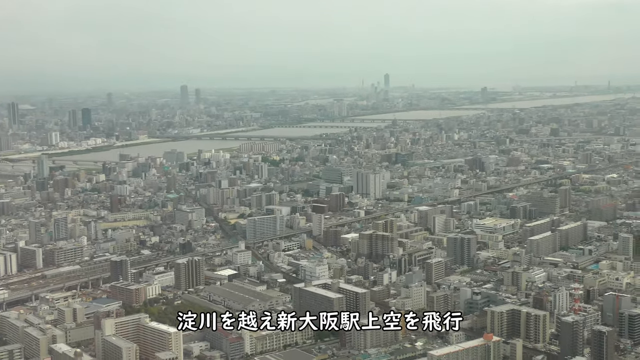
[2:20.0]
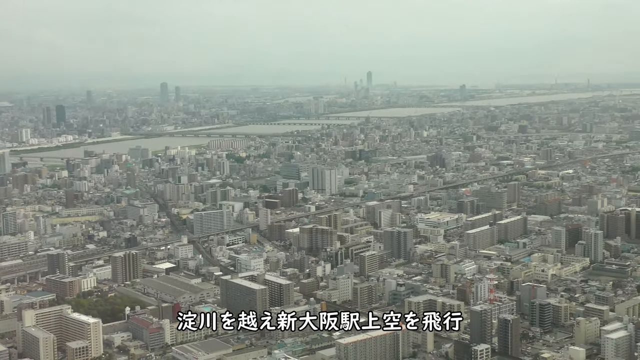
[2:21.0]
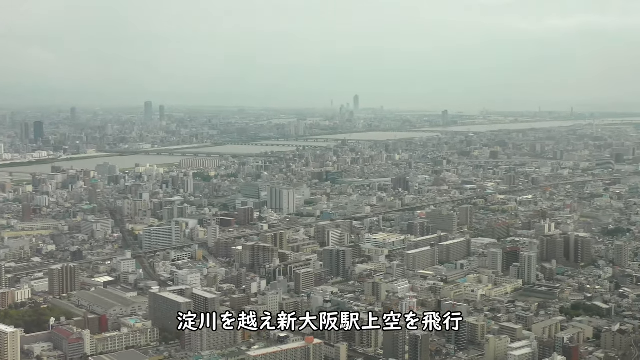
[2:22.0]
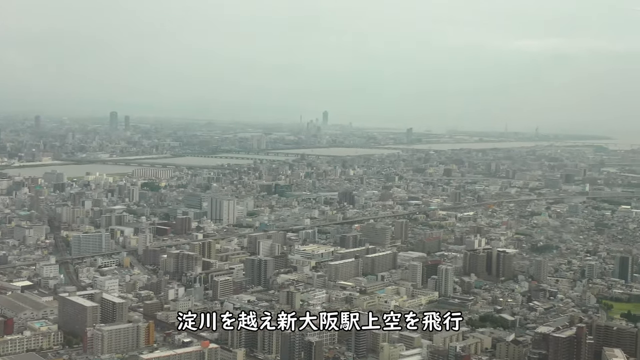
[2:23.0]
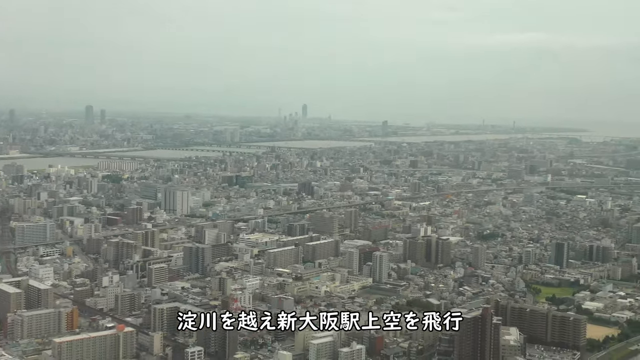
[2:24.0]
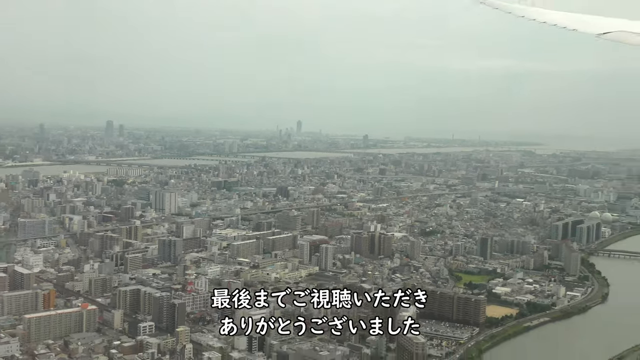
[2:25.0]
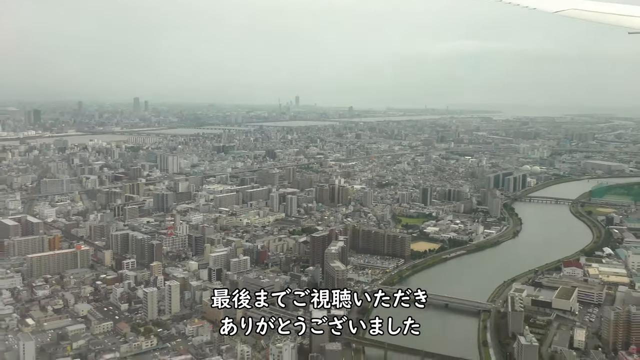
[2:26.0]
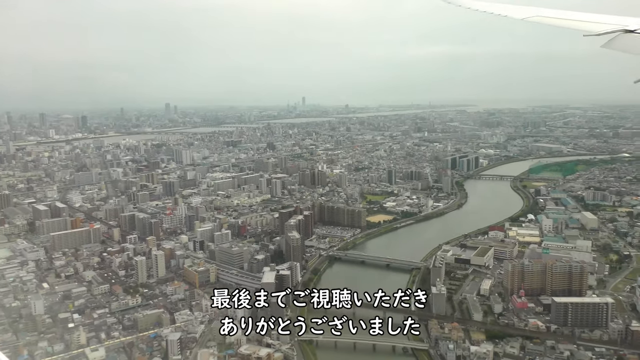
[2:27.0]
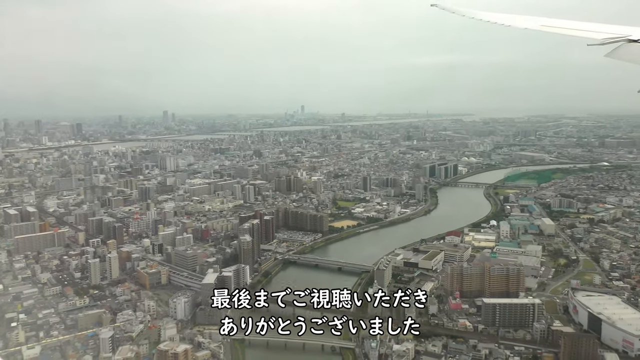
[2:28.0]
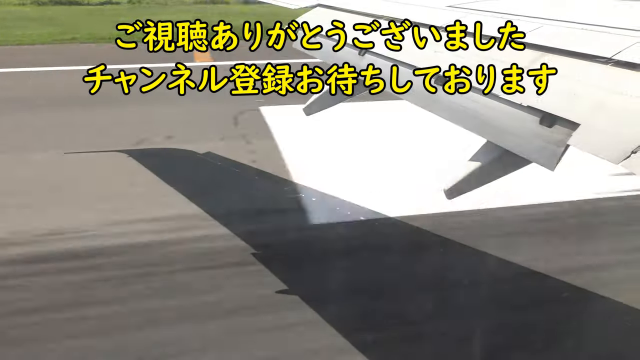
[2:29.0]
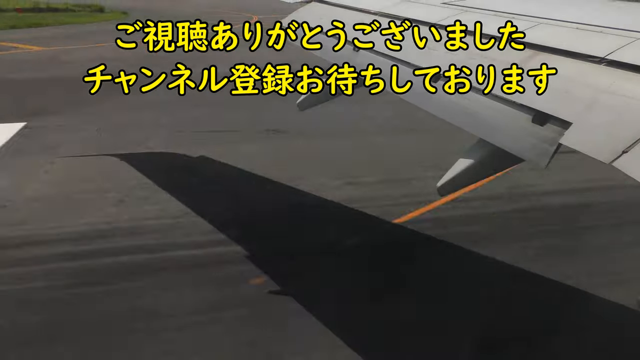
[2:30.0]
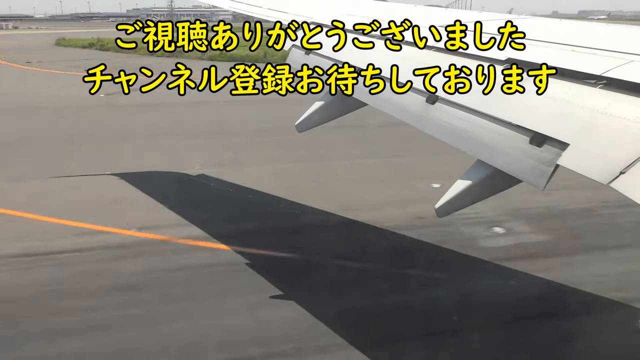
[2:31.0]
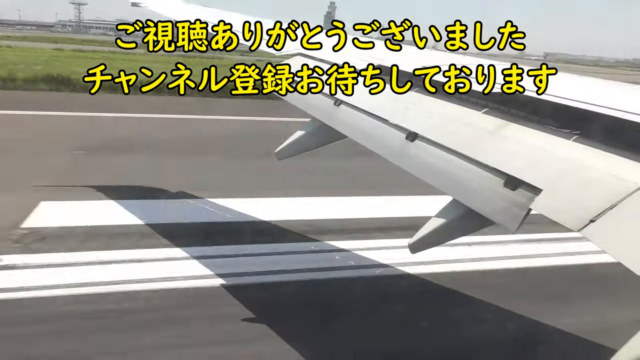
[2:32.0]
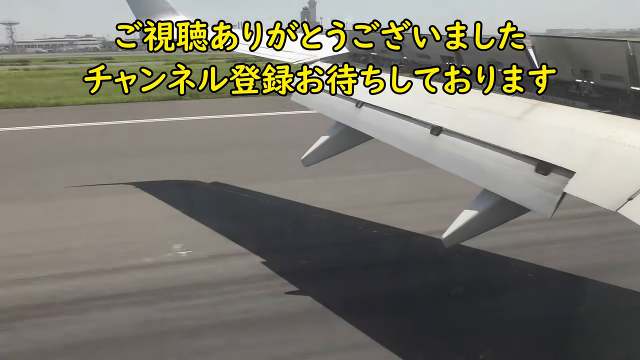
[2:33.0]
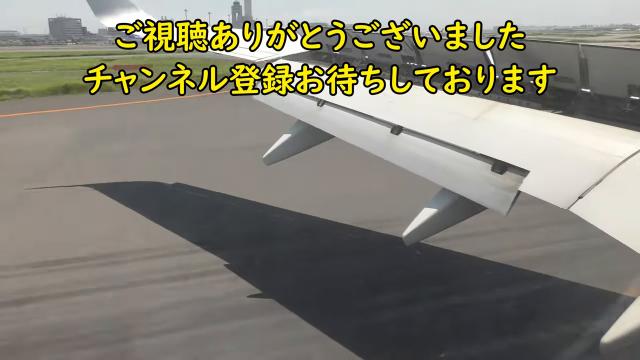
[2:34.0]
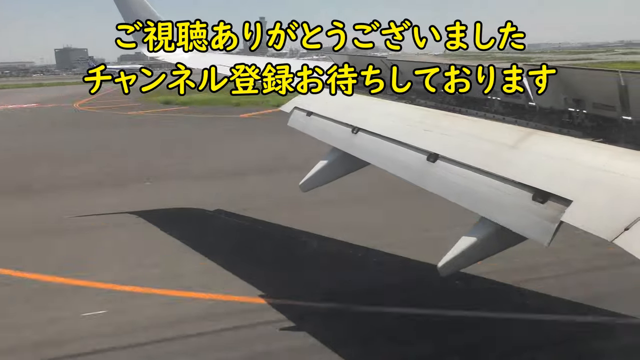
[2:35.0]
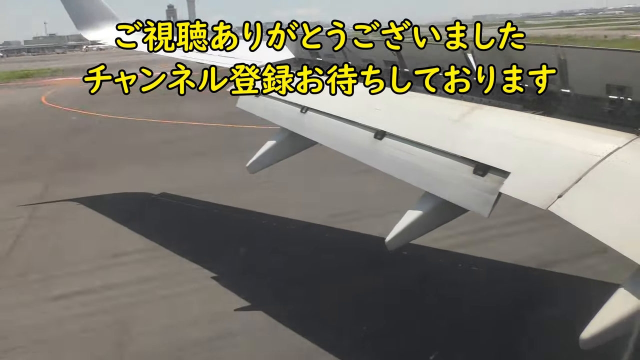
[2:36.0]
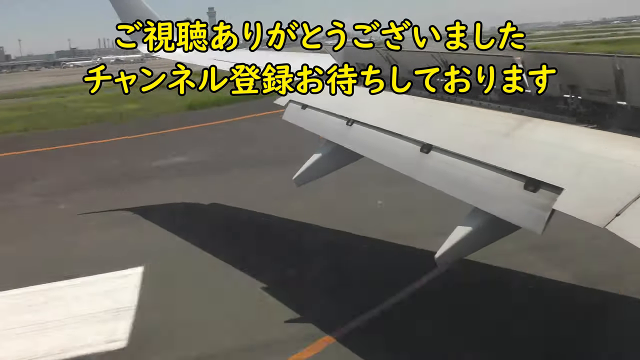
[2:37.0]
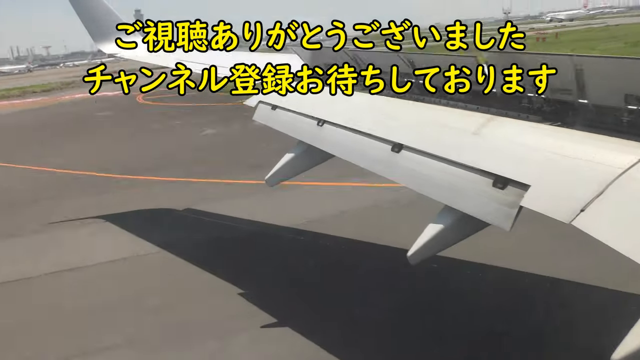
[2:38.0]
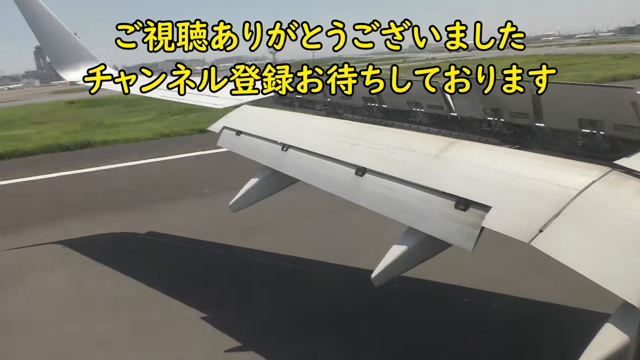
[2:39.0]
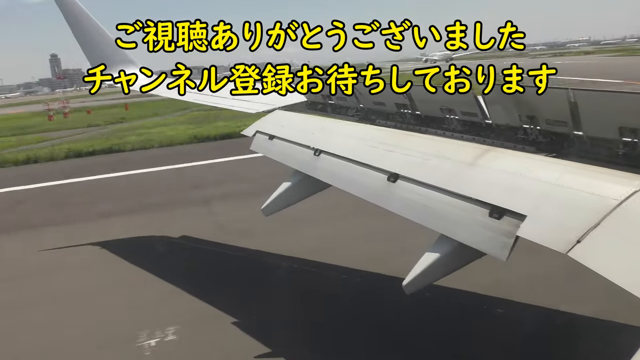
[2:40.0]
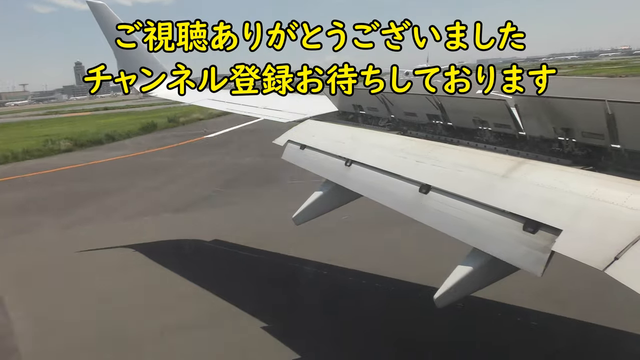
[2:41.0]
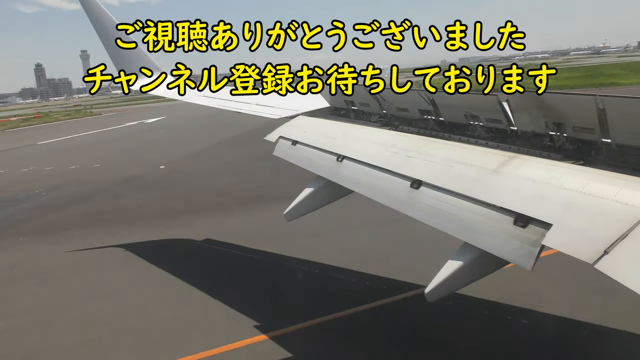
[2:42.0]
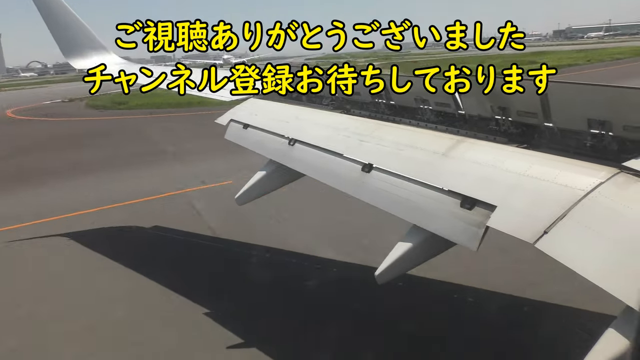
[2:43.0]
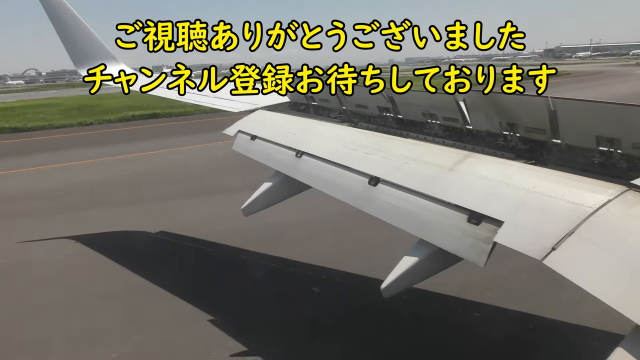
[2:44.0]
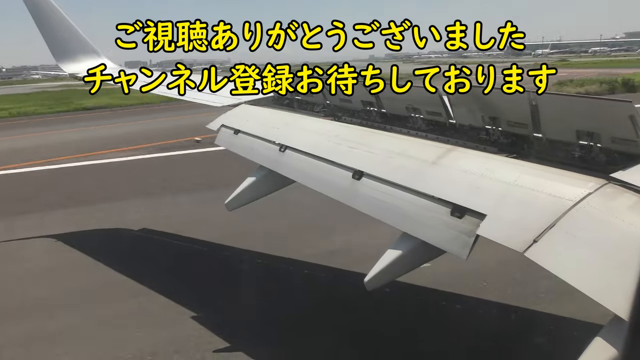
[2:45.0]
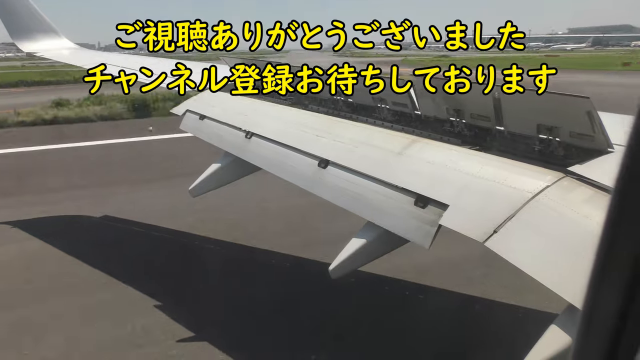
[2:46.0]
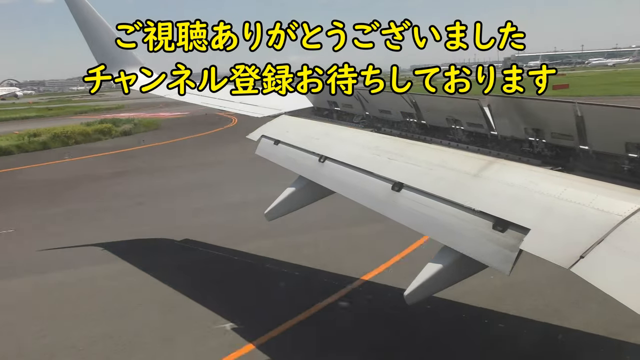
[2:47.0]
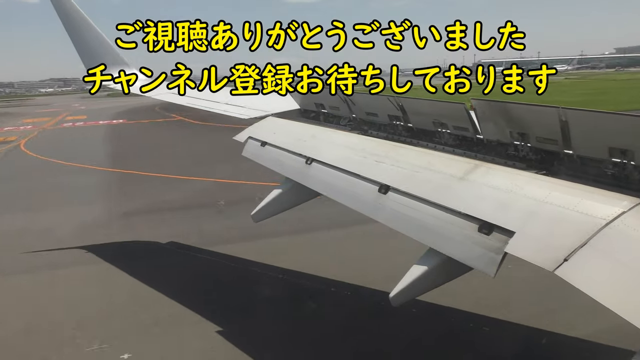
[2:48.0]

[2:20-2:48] The aerial tour of Tokyo, Japan shows various medium-sized buildings in the city, with Japanese letters in various patterns and shapes in bold white lettering at the bottom of the screen. The plane crosses a river with four bridges visible. The video then cuts to the jetliner landing on the runway. The left wing, with a white and gray texture, is visible with its flaps down as the plane starts to land. The wing's shadow falls on the tarmac, which is dark gray textured asphalt with a thick white line going across it. The plane appears to be moving very fast as it lands. More Japanese text, this time in bold yellow lettering, is at the top of the video.